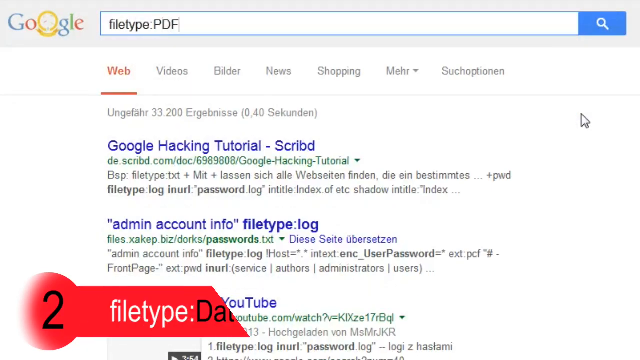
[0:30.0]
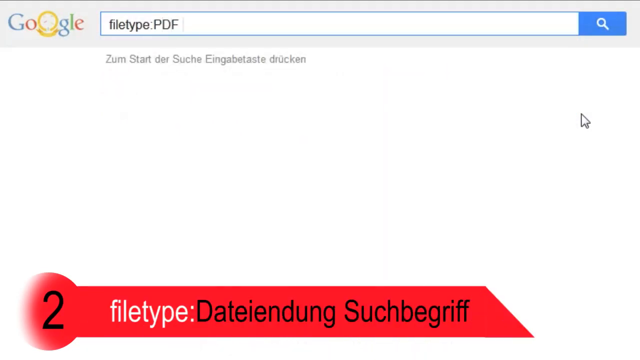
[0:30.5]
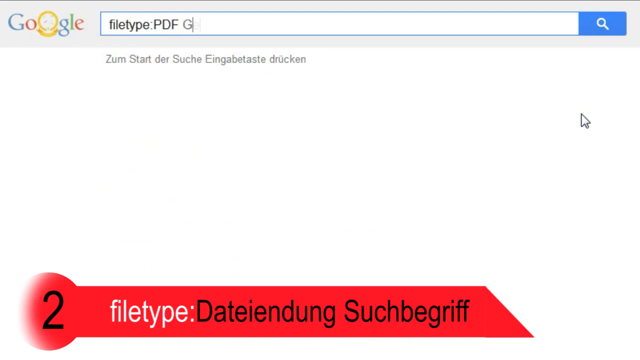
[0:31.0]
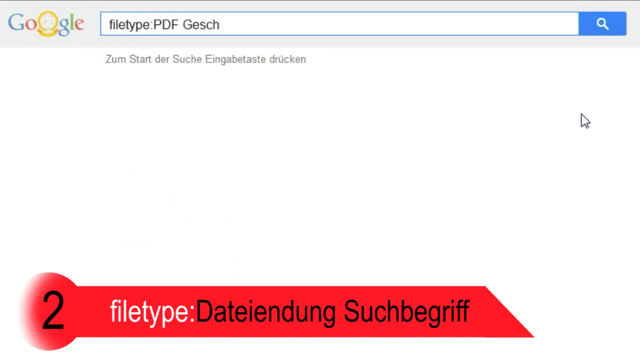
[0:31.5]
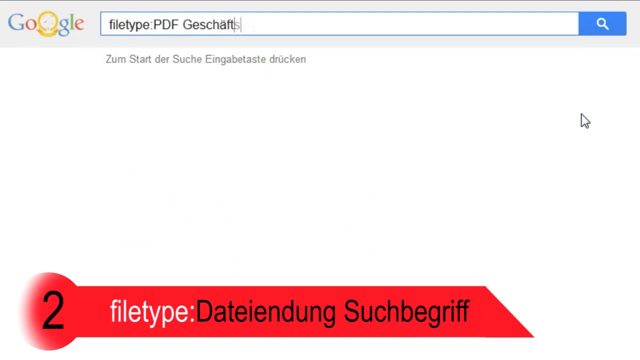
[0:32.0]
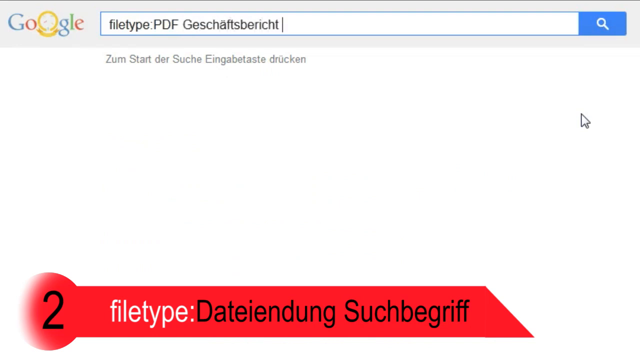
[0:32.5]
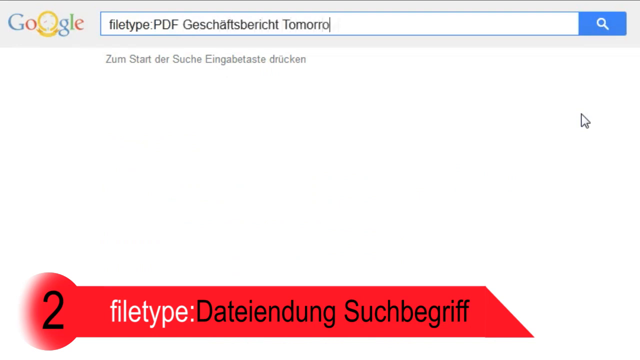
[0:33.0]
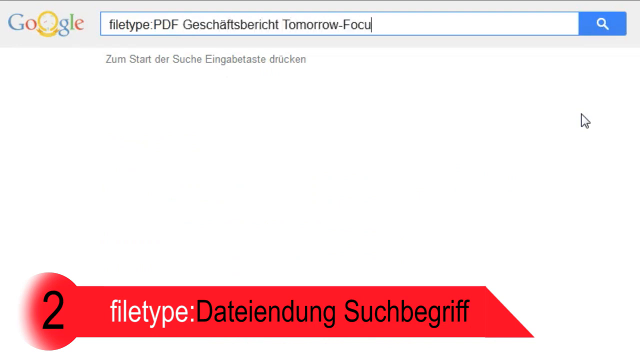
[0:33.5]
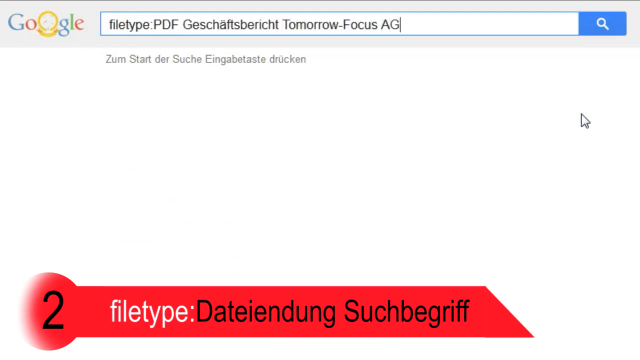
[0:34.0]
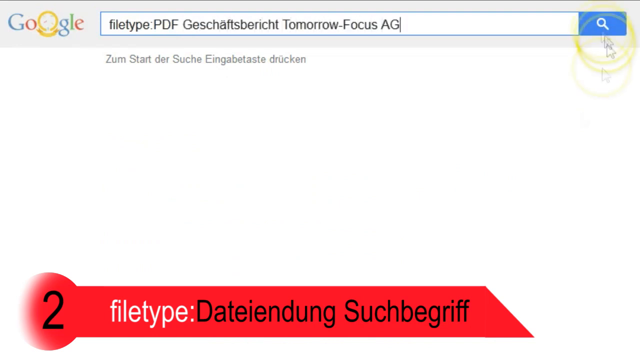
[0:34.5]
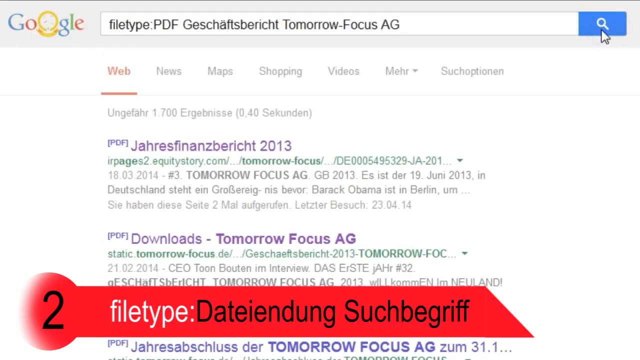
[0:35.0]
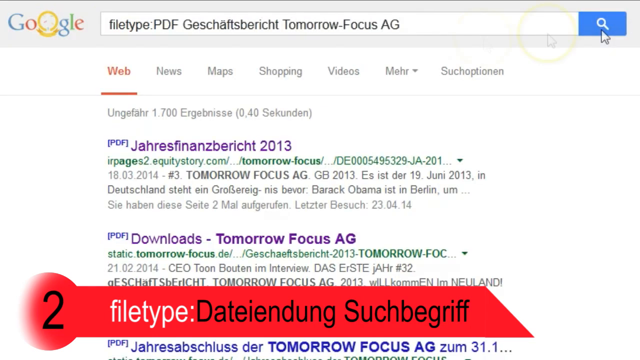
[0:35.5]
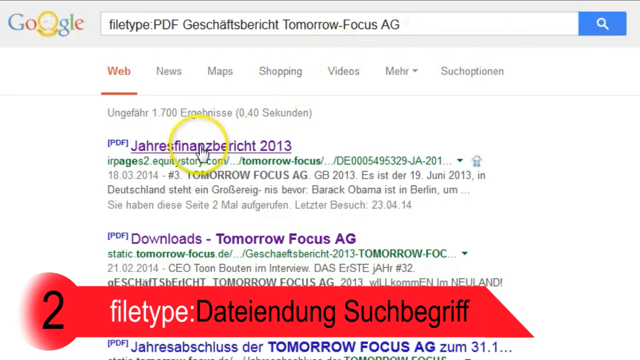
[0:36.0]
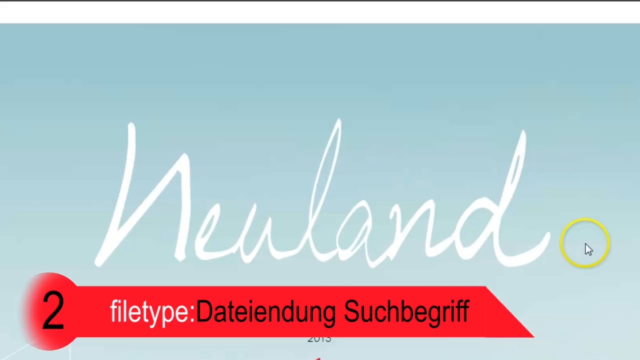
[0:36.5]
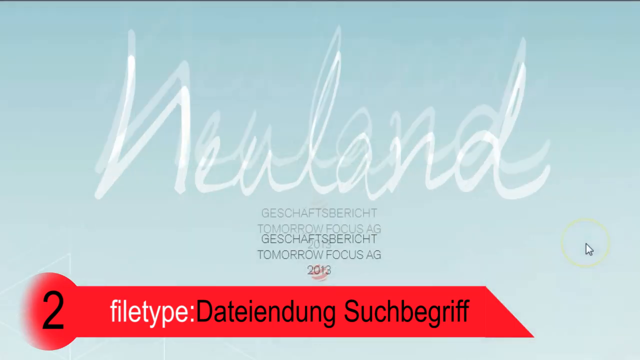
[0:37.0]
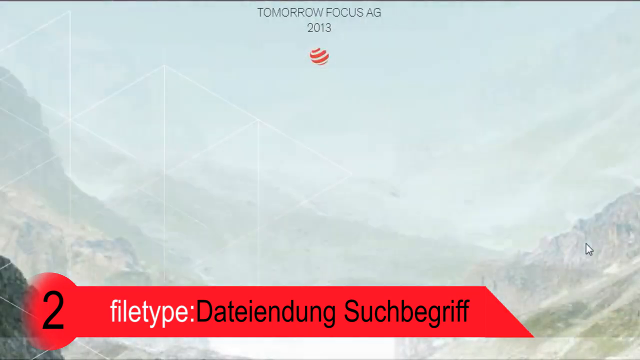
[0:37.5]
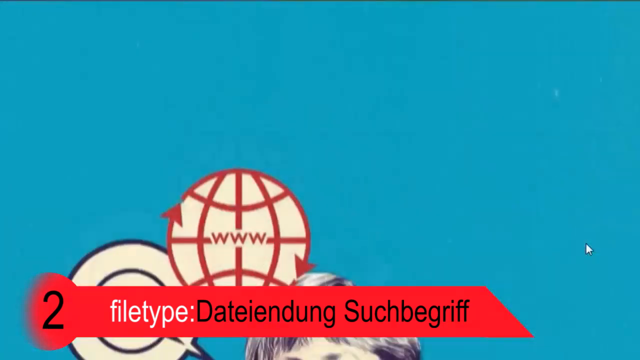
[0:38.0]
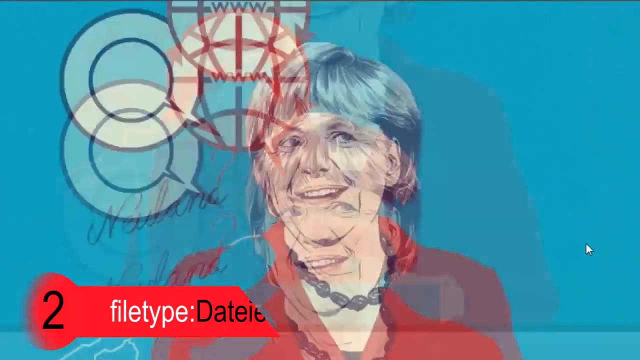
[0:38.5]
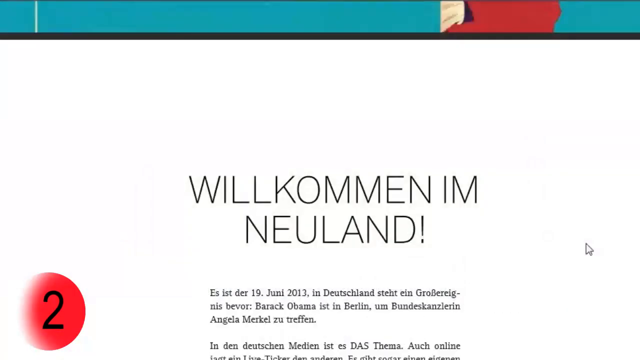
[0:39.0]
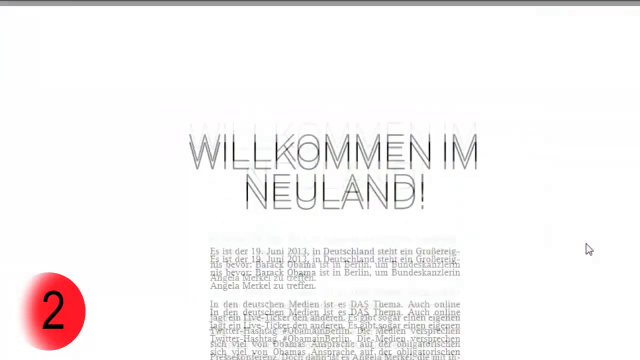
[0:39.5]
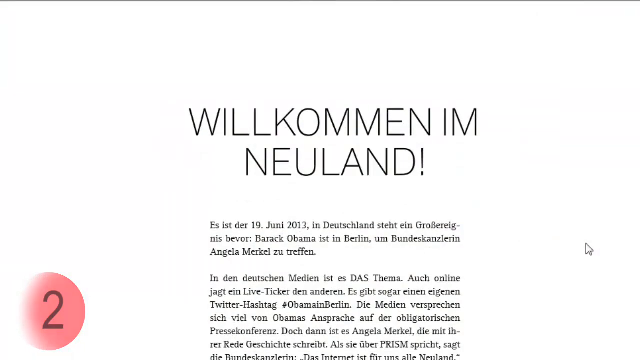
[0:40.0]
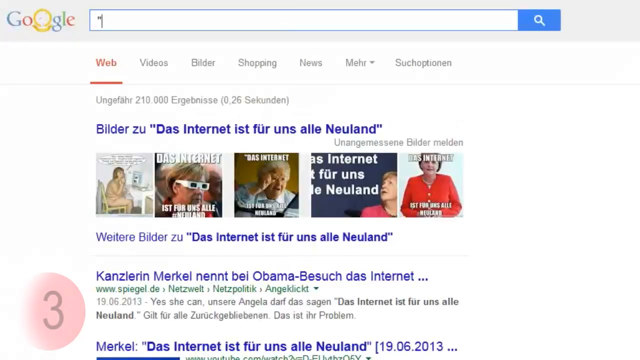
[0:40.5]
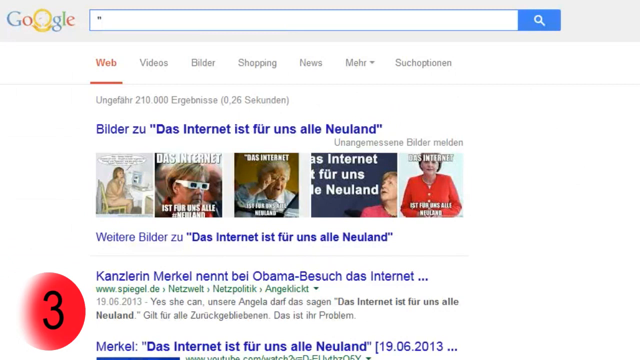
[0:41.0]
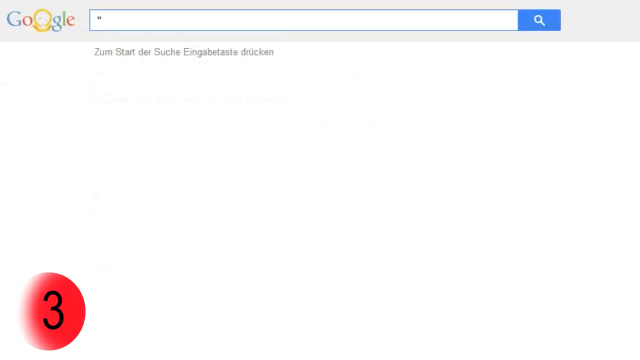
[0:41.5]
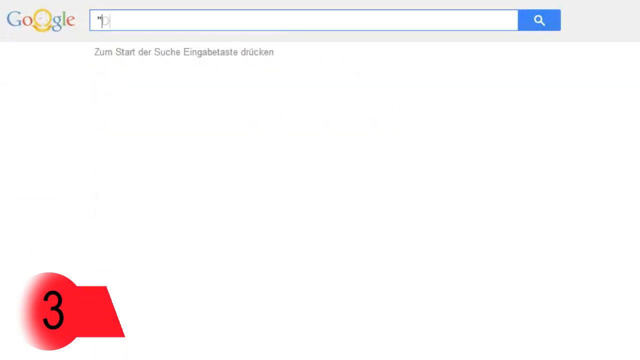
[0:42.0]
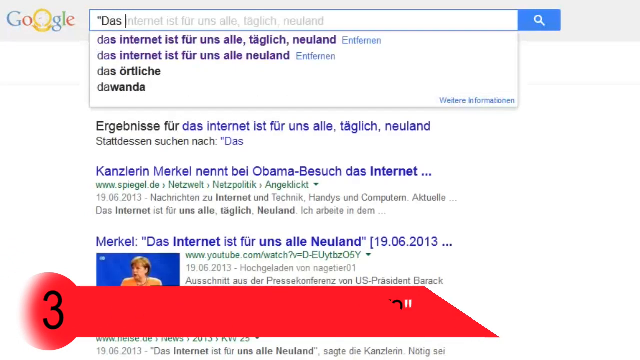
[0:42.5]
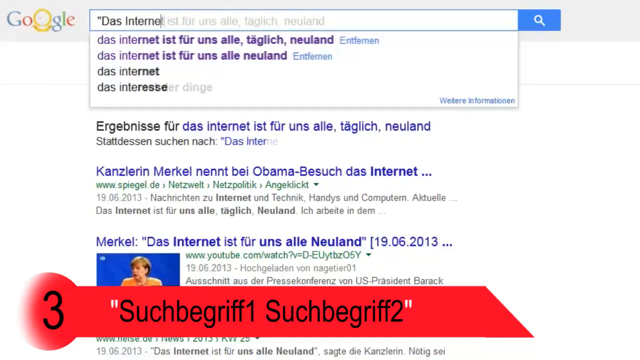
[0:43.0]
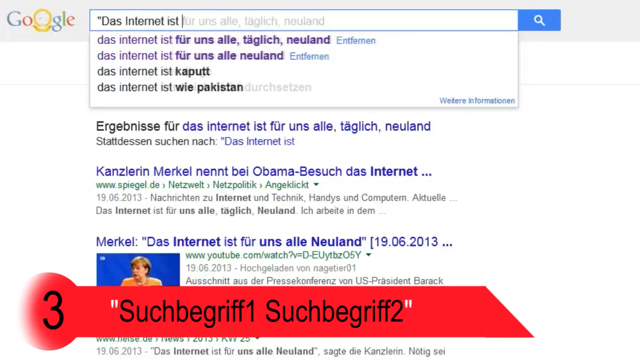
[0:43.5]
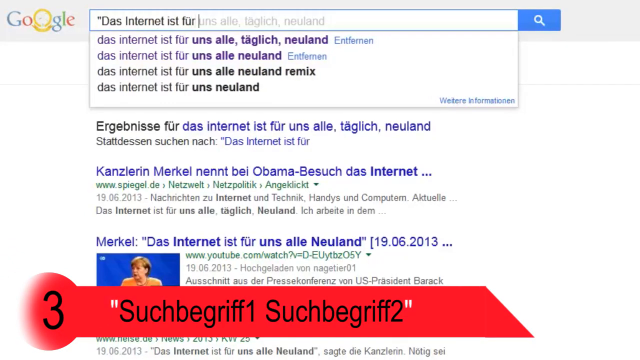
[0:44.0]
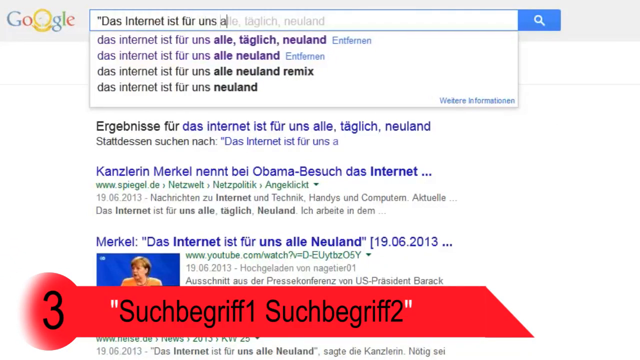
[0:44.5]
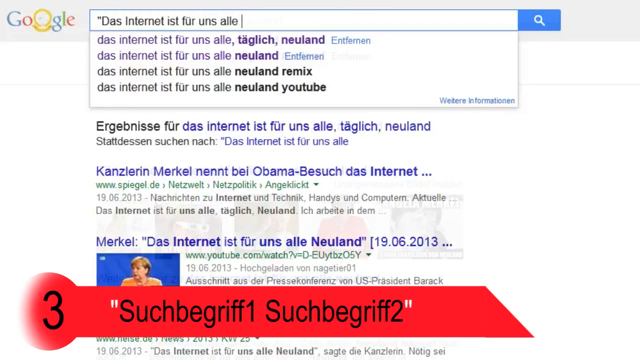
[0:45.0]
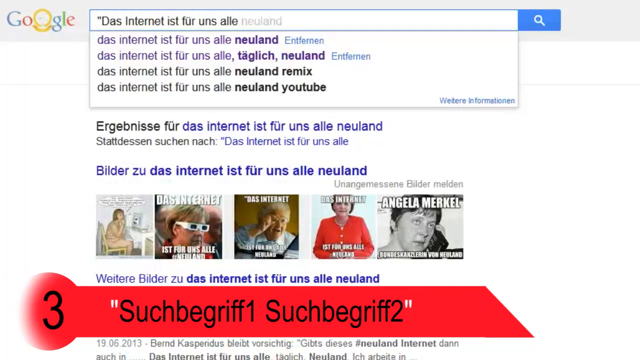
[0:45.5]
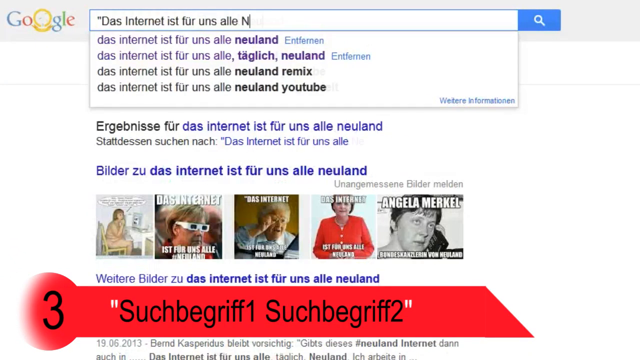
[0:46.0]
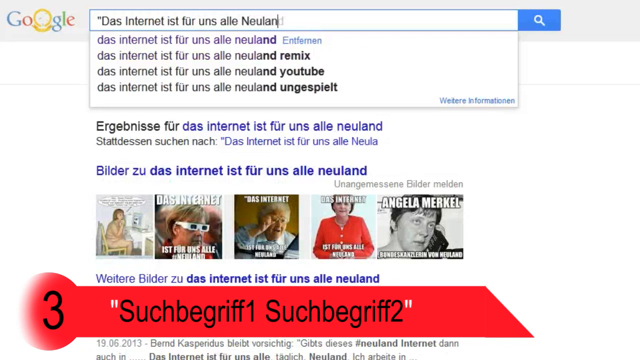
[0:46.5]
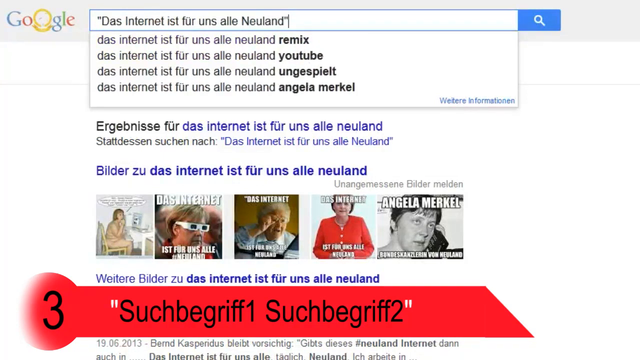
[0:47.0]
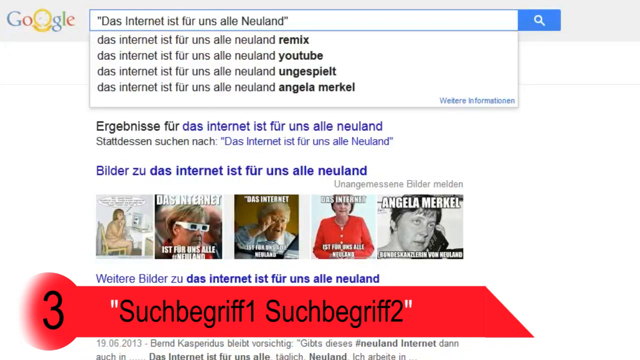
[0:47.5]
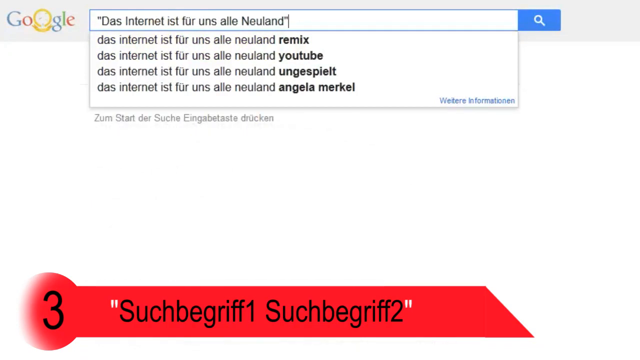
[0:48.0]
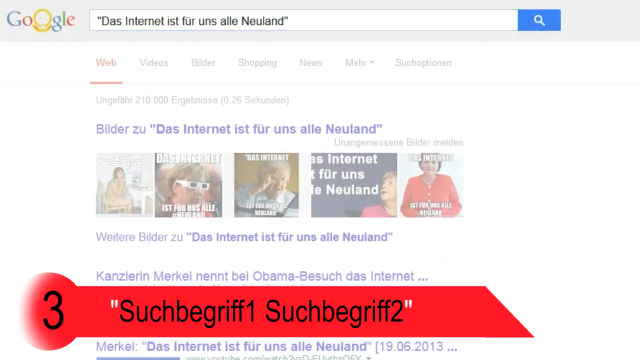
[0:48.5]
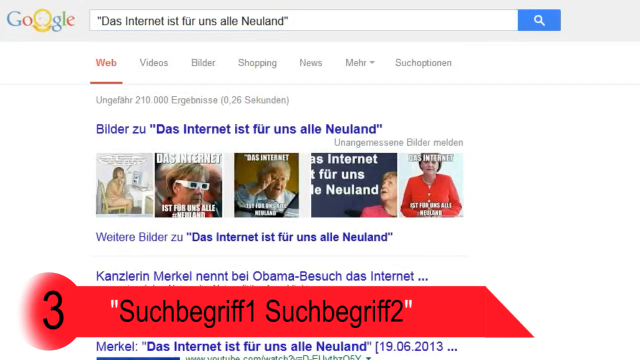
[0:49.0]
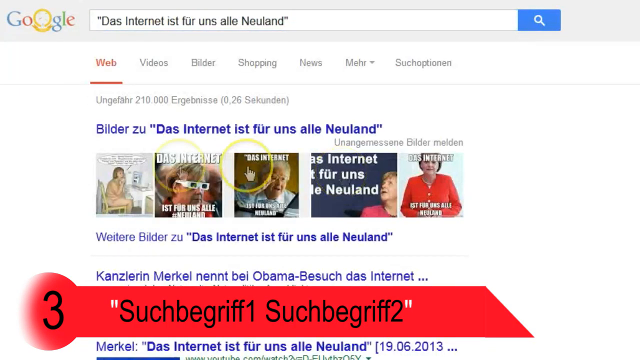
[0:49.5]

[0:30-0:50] On a Google page, the search bar says "filetype:pdf", then a word in German, followed by "tomorrow - focus ag". The search is run and the mouse clicks on the first file that appears; when it clicks, a yellow circle appears around the mouse. At the bottom of the screen, the number two is on top of a red banner that says "file type:" and then two words in German. After opening the first result, the person scrolls down the web page, showing multiple images of people on a blue background along with some nature imagery. They continue scrolling and then open another search, typing in a German search that includes the word "internet". At the bottom of the screen is the number three on a red banner with more words in German. They press search and then hover over one of the search options.